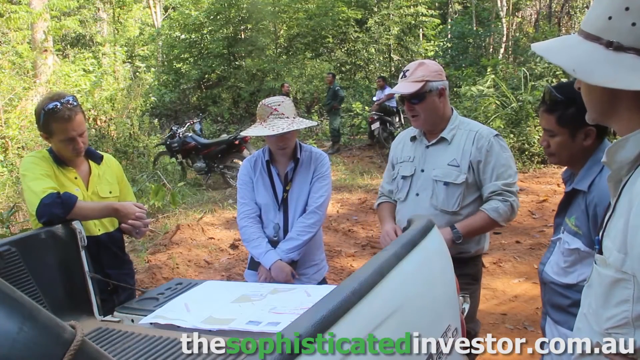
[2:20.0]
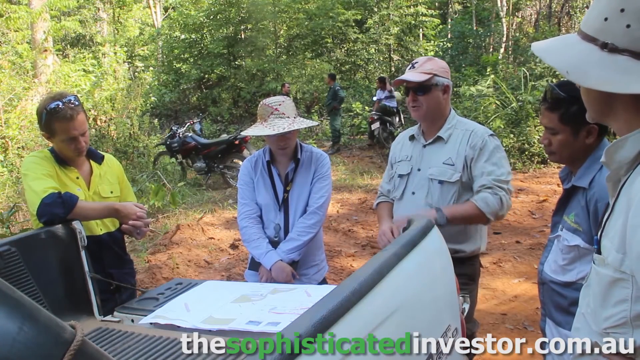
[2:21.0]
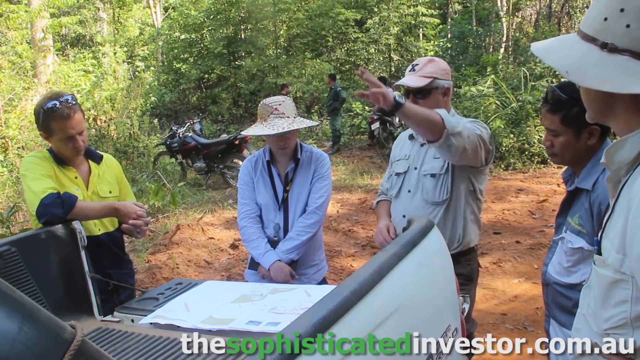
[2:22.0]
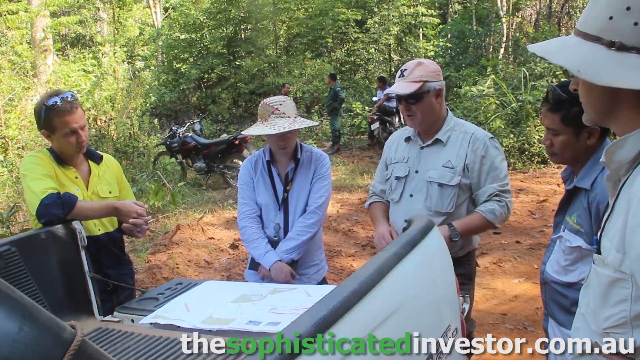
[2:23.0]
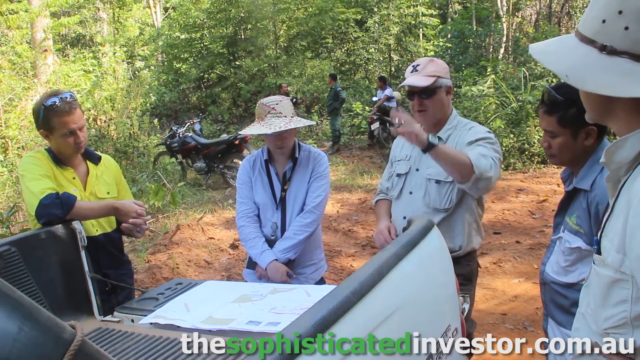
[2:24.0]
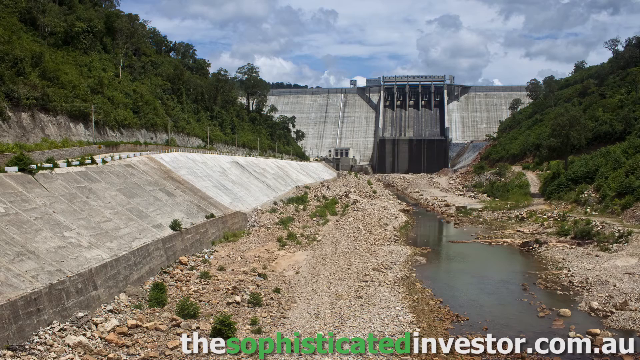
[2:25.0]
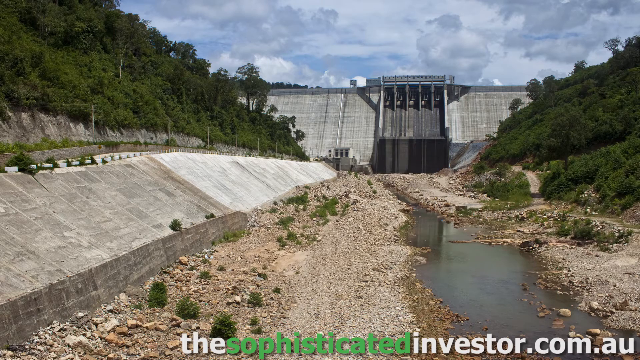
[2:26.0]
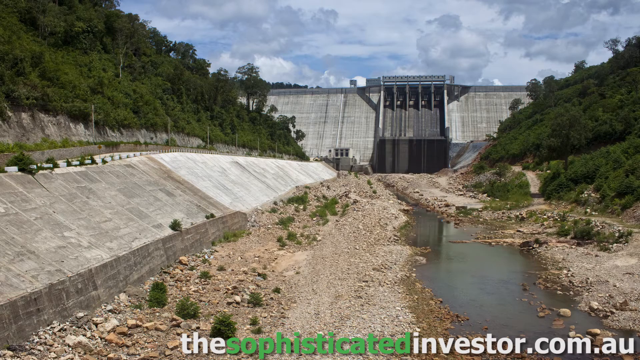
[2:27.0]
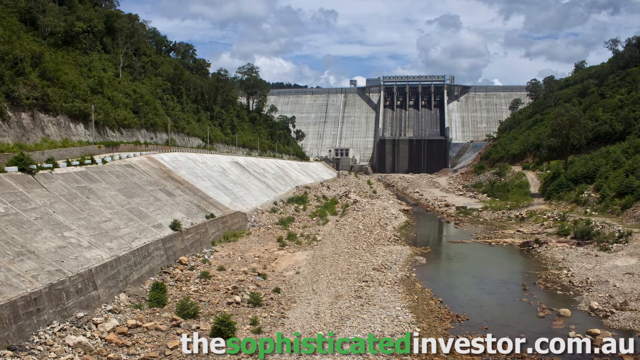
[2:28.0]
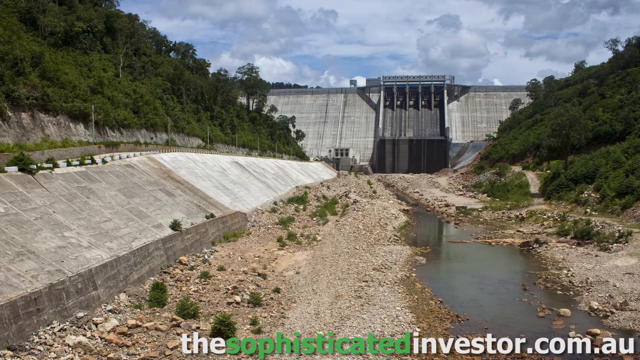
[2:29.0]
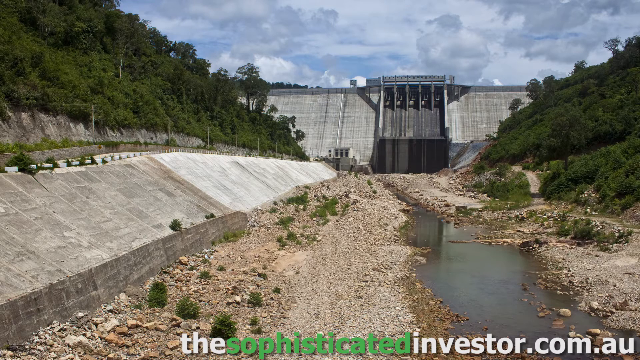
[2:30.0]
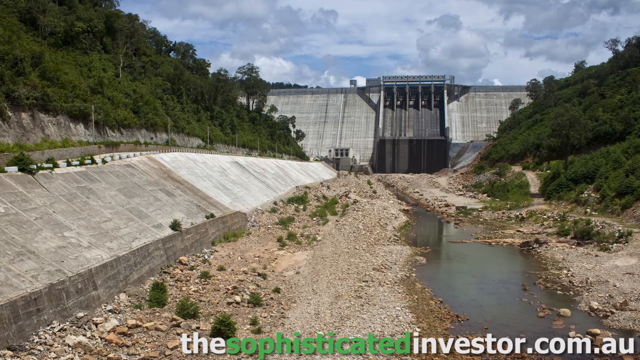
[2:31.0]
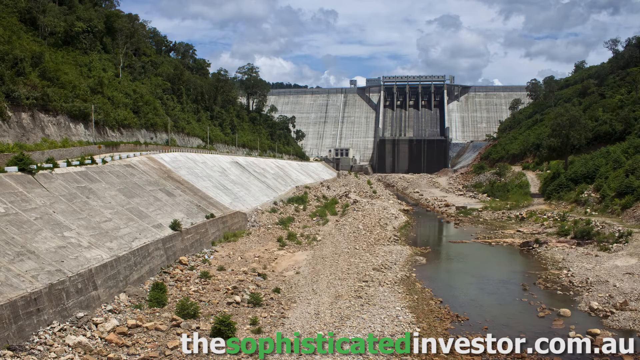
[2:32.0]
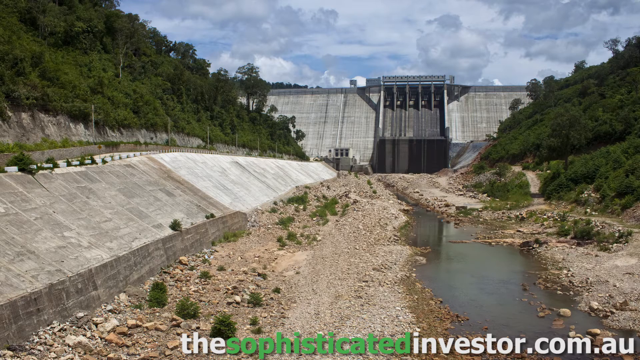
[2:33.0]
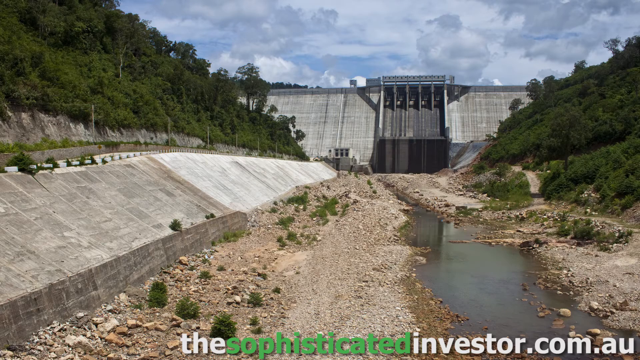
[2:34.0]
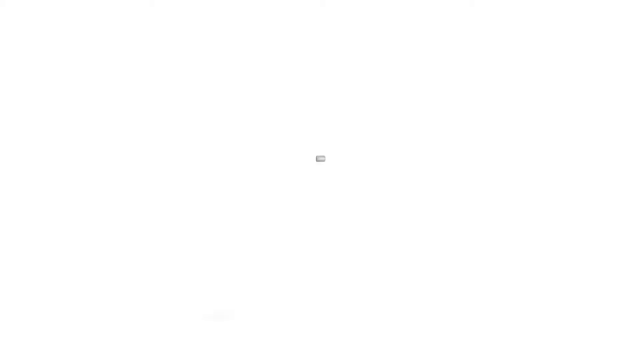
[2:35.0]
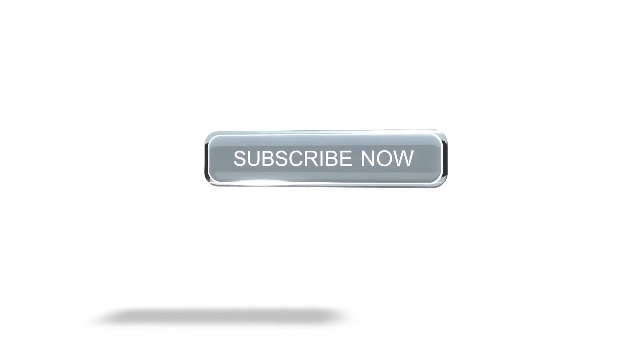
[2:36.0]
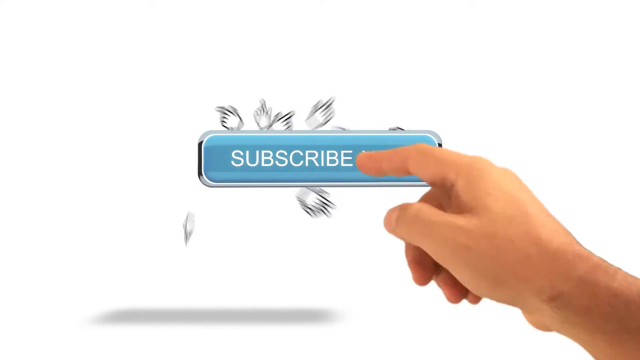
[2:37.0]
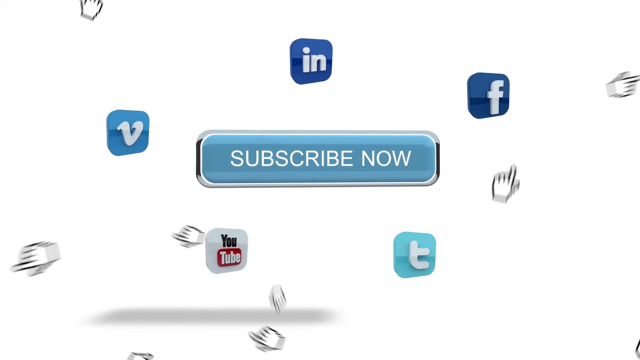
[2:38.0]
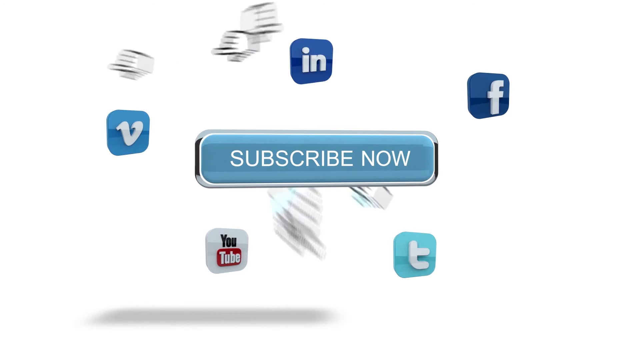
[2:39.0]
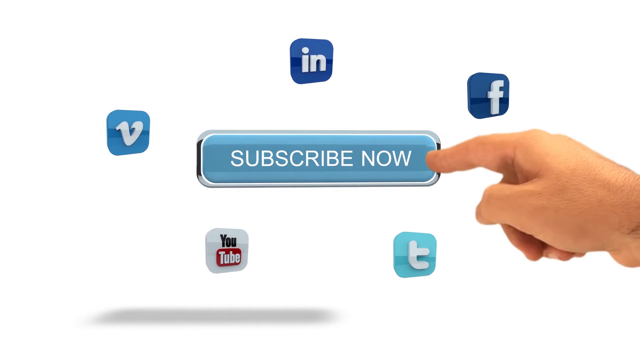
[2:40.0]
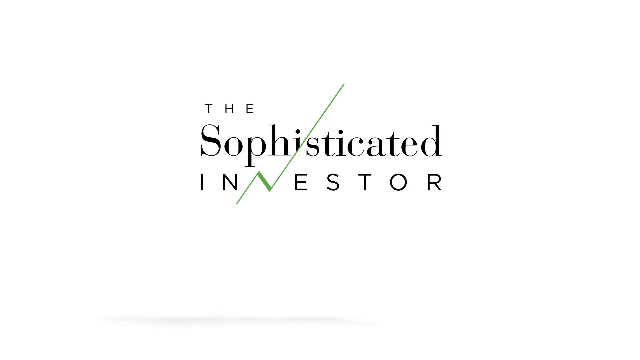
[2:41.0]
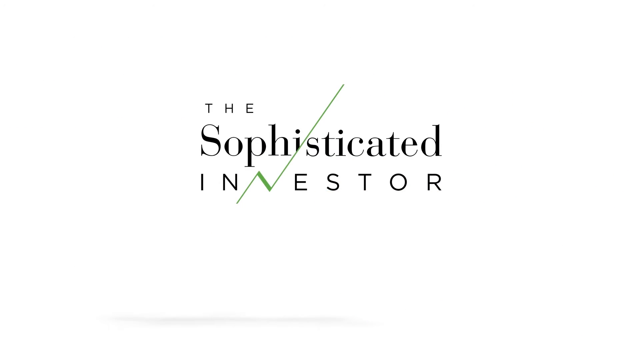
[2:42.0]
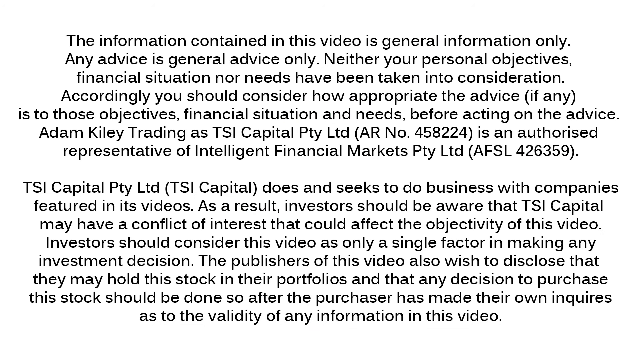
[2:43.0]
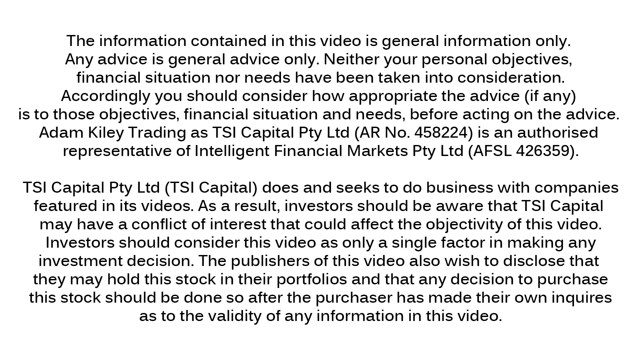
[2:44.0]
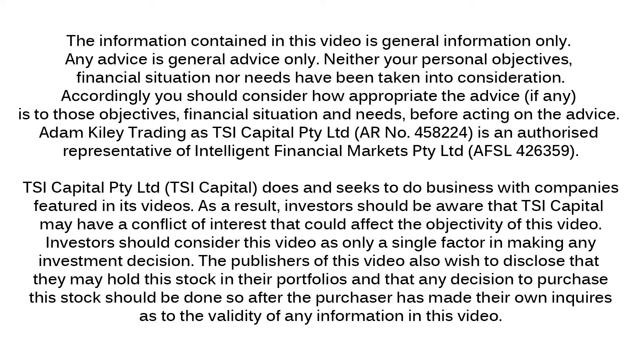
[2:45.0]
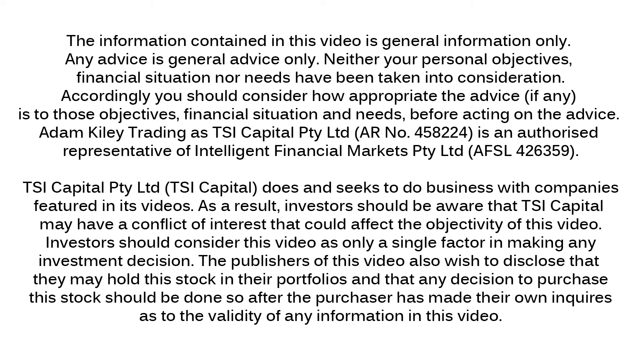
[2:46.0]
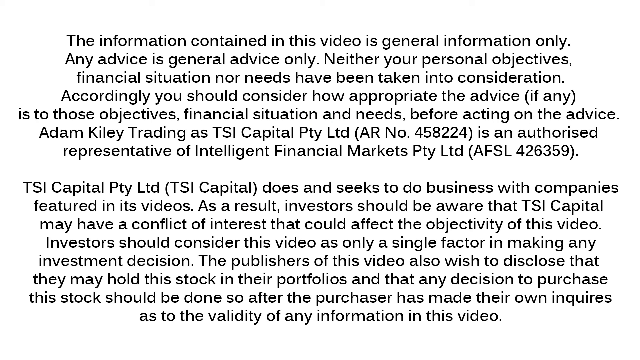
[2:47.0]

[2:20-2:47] A group of people appear to be outside, with some sort of dirt clearing or path in the very center, surrounded by very green, lush trees. There are five people in the foreground who appear to be middle-aged or older. On the left is a man in a yellow shirt with sunglasses on his head, looking roughly toward five o'clock. Next are a couple of older people with hats, facing generally toward the camera. On the right, two more people face roughly toward the left and look to be leaning over around the bed of a truck in the lower left-hand corner. The third person raises his left hand in the air and looks like he is talking. The video then transitions to a dam in the distance, its wall visible from left to right, surrounded by trees on both sides. The camera is in what could be called a river, where the water normally flows, and it appears almost entirely empty, with all the gravel and rocks visible. The sky is very cloudy. Finally, a subscribe button appears in the center and a hand comes in from the lower right-hand corner to poke it.